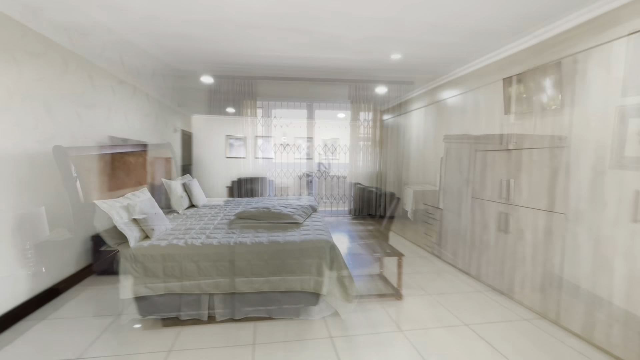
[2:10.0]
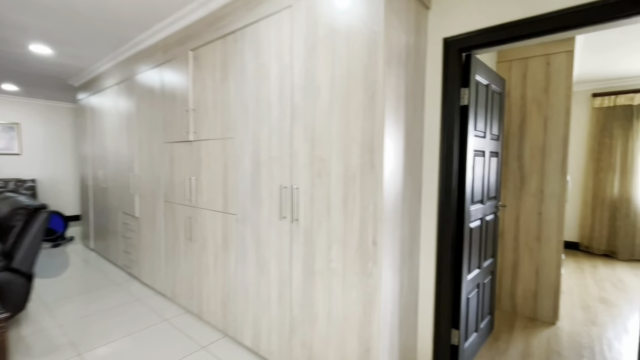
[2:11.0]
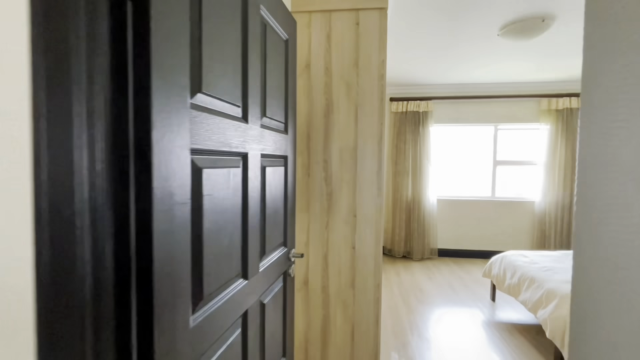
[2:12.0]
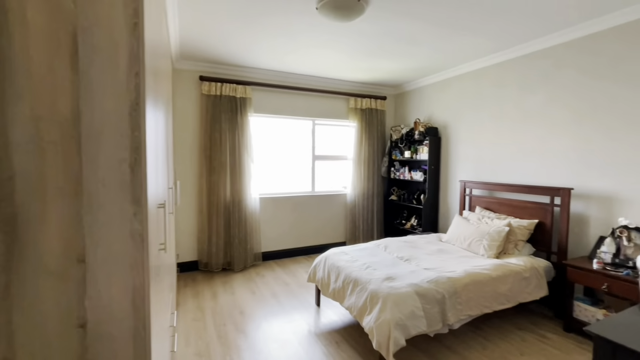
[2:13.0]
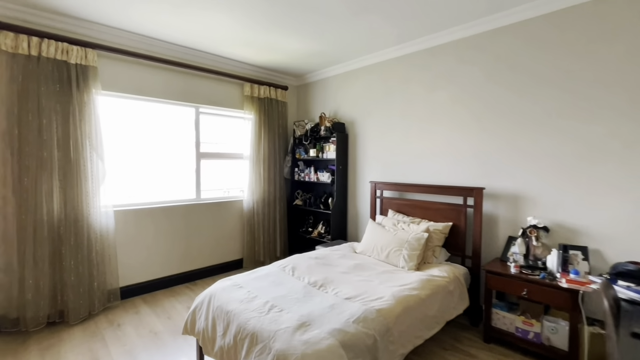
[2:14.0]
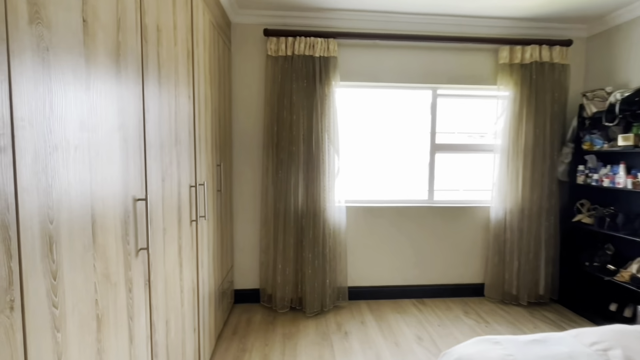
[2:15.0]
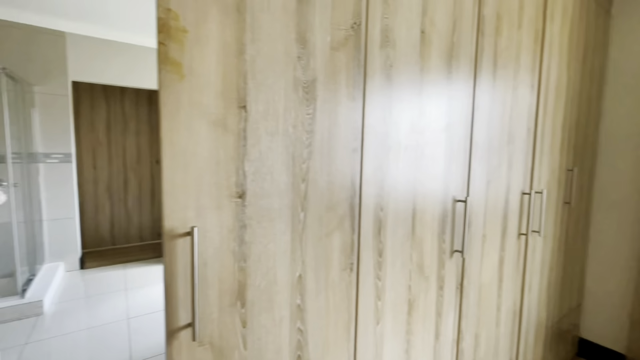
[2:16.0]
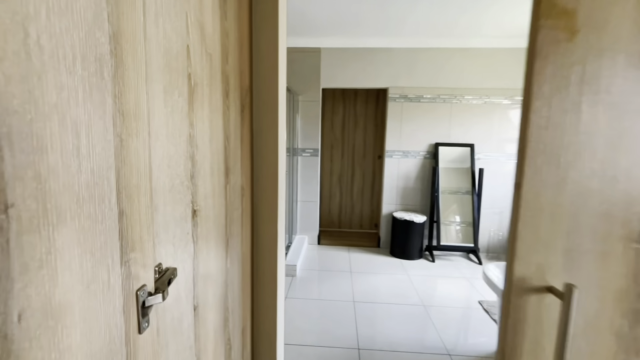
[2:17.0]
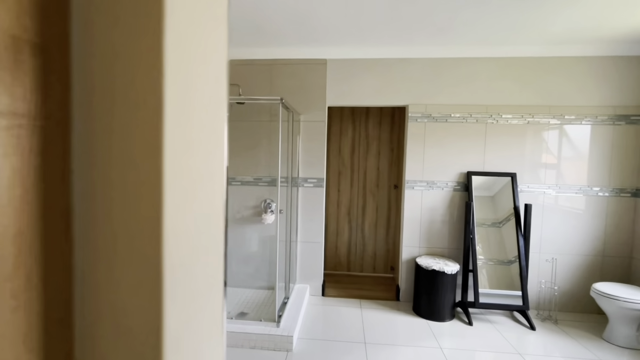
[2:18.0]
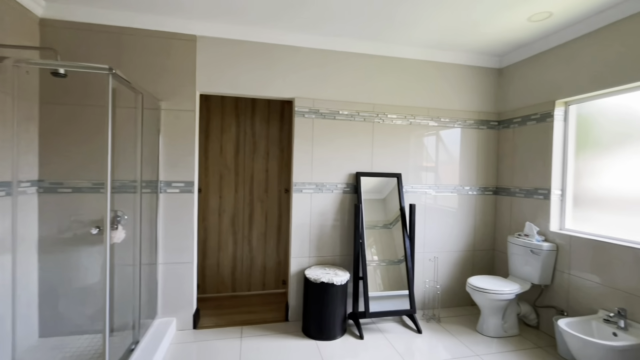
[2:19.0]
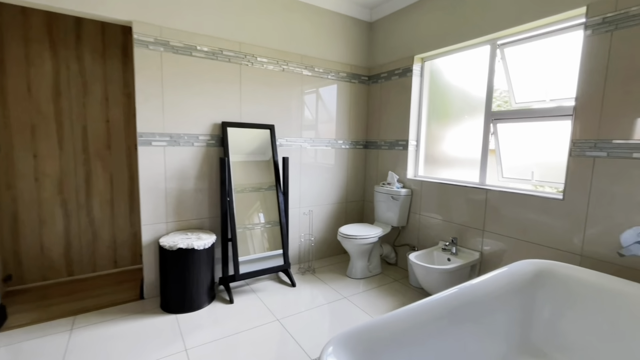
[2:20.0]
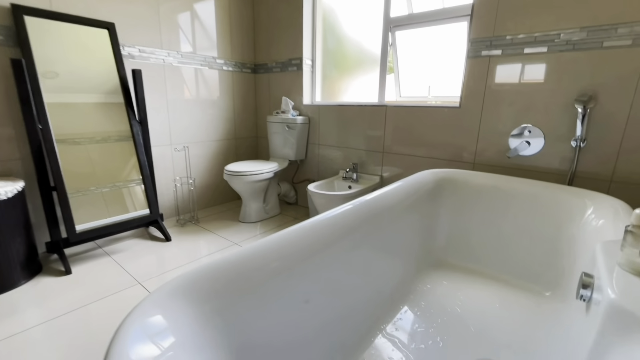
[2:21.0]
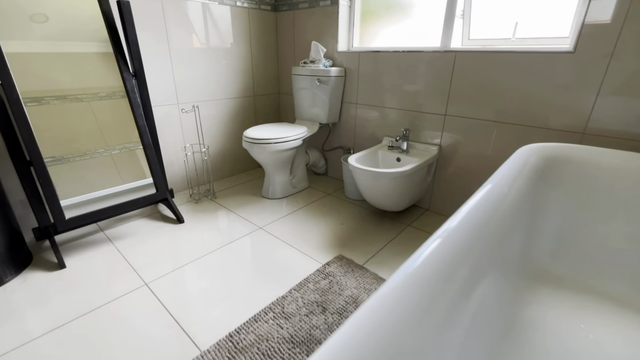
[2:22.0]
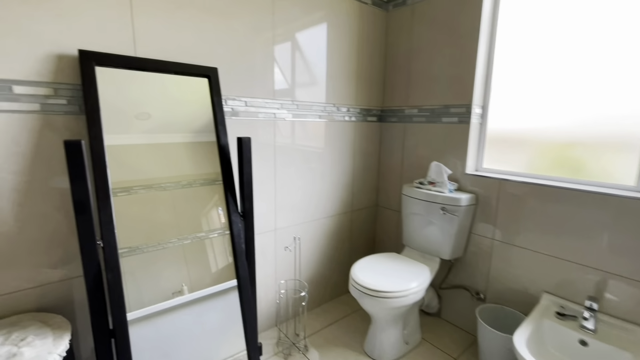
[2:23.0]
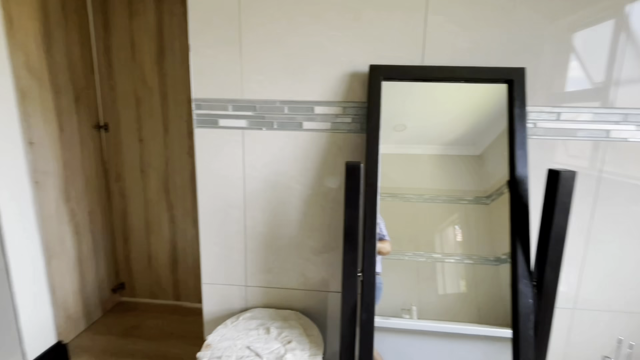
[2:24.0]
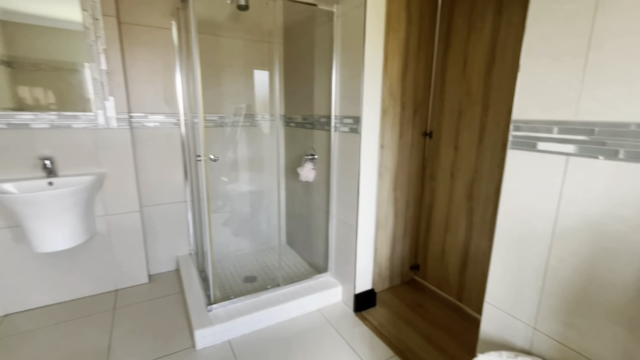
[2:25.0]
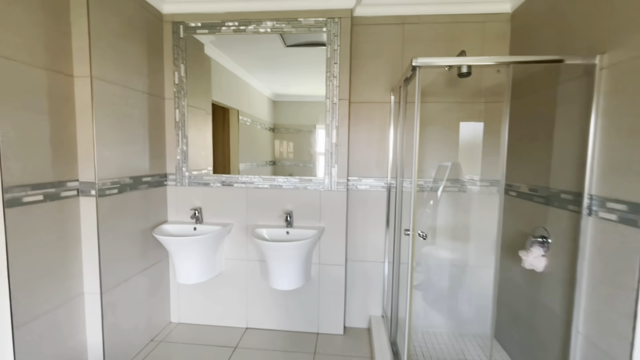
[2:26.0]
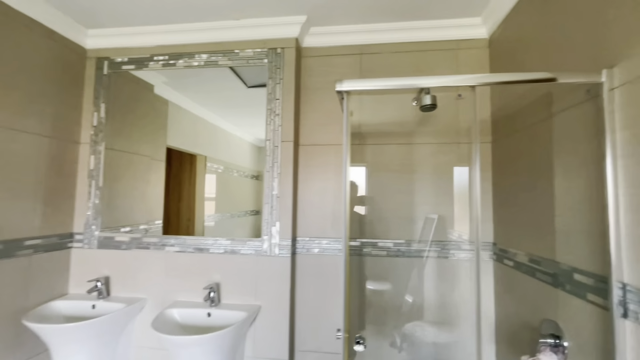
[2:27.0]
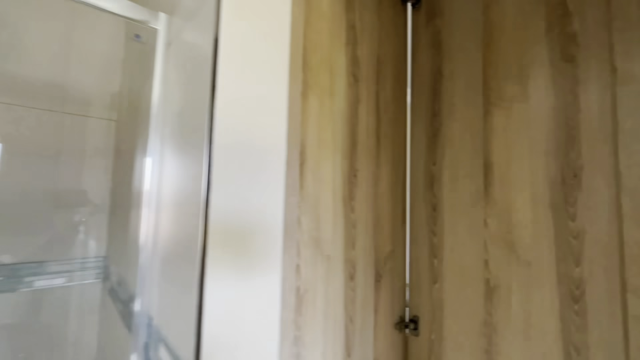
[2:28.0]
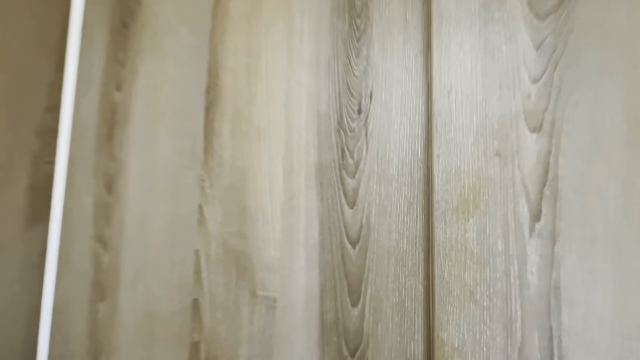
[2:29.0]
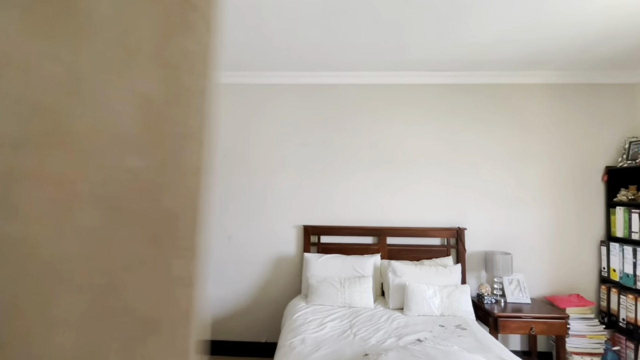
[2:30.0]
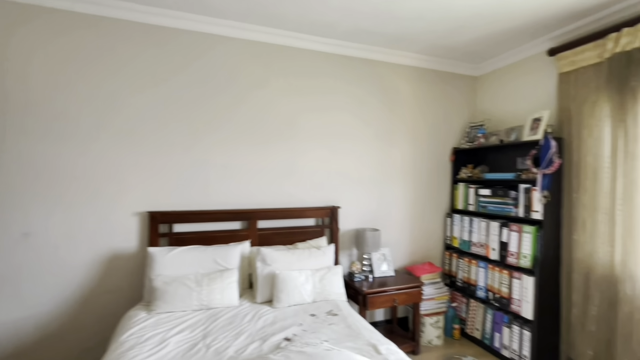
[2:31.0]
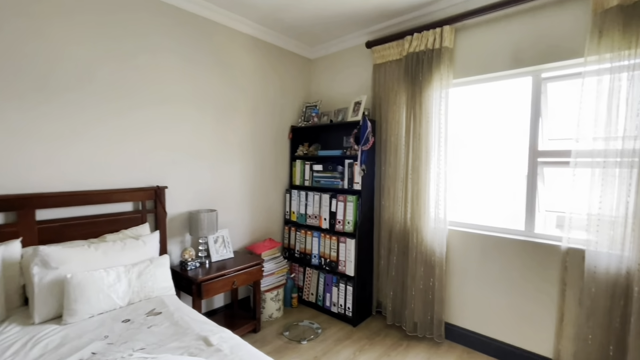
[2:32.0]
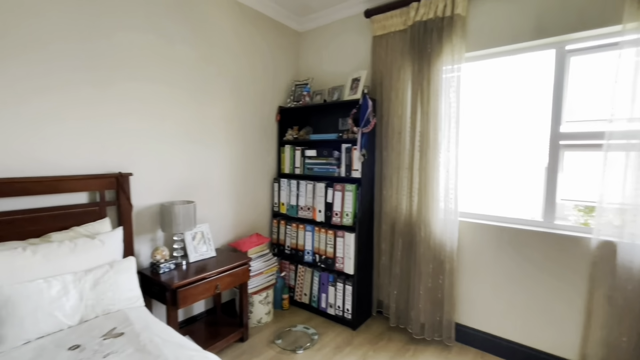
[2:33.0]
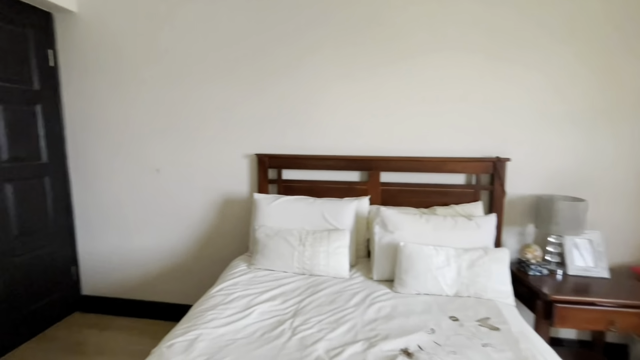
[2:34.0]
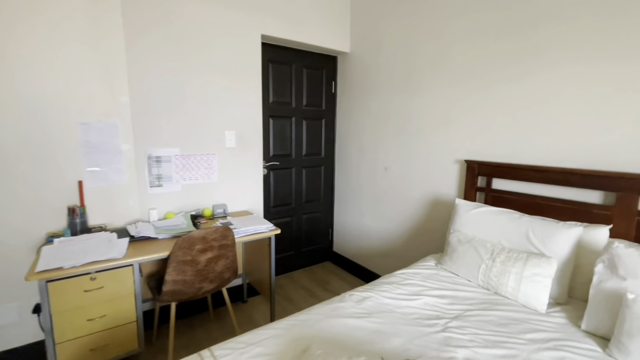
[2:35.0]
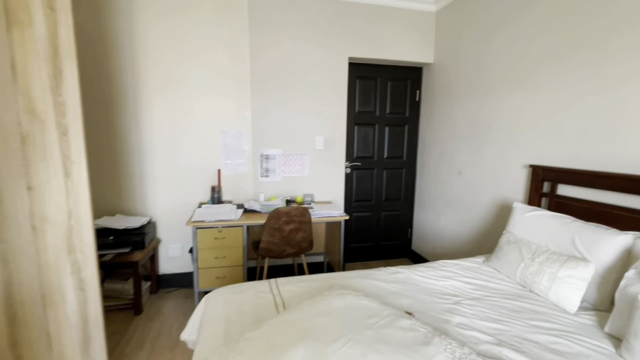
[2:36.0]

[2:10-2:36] The camera goes into a room with a single bed and a wide closet area. From the left, it enters a bathroom with a more normal-looking bathtub, a toilet, a bidet and a full-body mirror with black corners; everything else in this bathroom is pure white porcelain. The walls are the same beige as the other bathroom. There are two sinks with a square mirror above them, and besides the bathtub there is also a walk-in shower. Through the bathroom is another room that also looks like it has a somewhat bigger bed, though still not couple size. A shelf is full of different-coloured dossiers, and there is a little desk with some papers on top and a little brown chair. To the left of the desk there also seem to be some black objects.